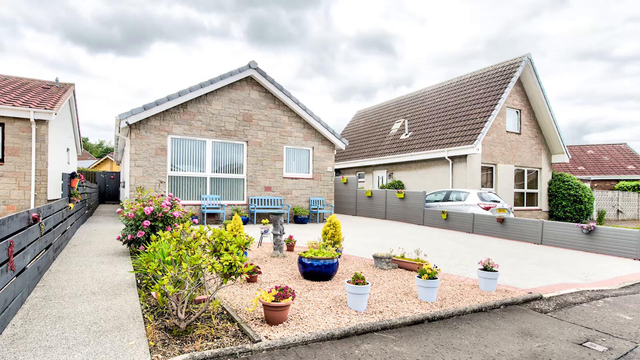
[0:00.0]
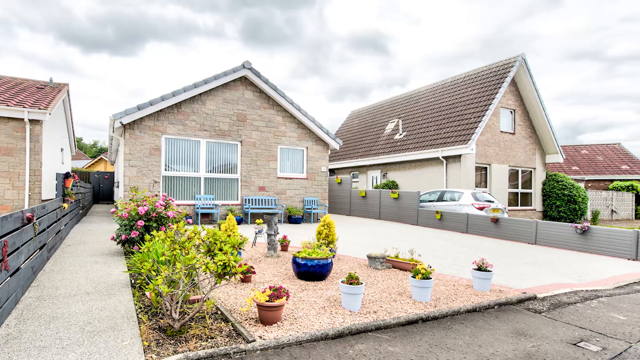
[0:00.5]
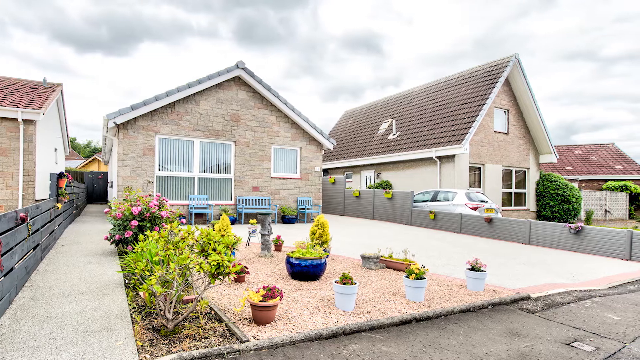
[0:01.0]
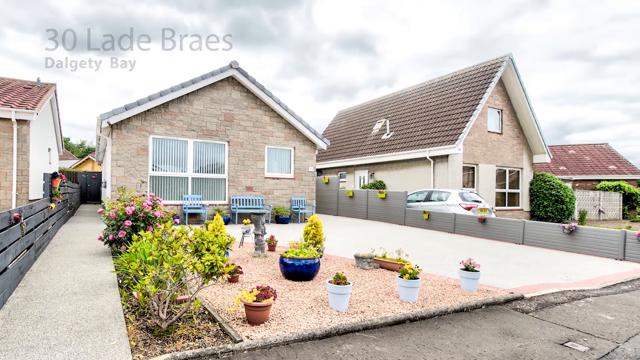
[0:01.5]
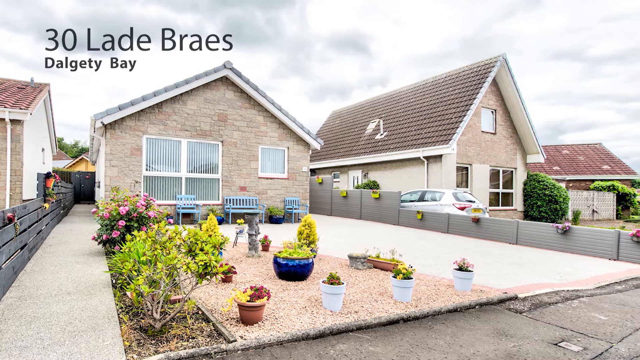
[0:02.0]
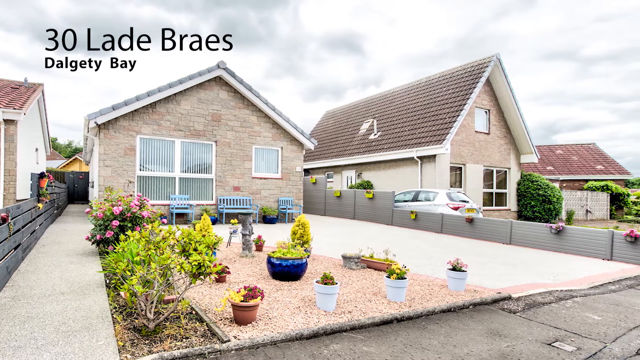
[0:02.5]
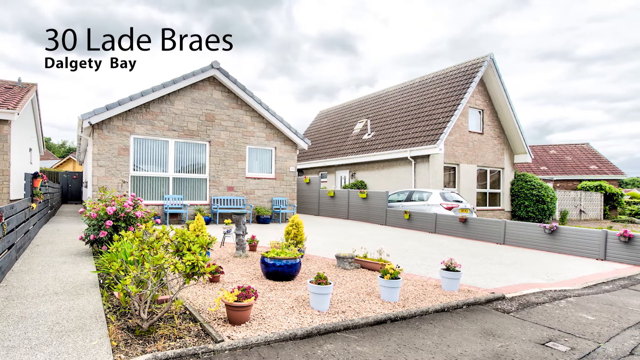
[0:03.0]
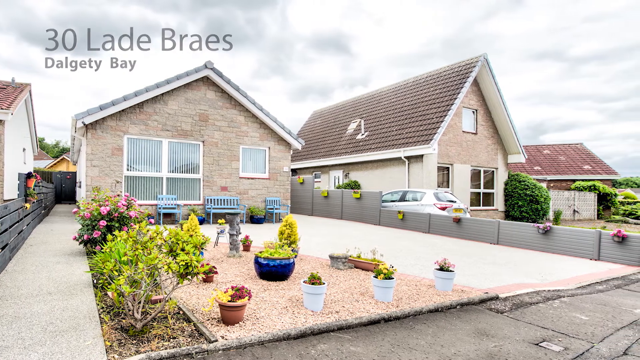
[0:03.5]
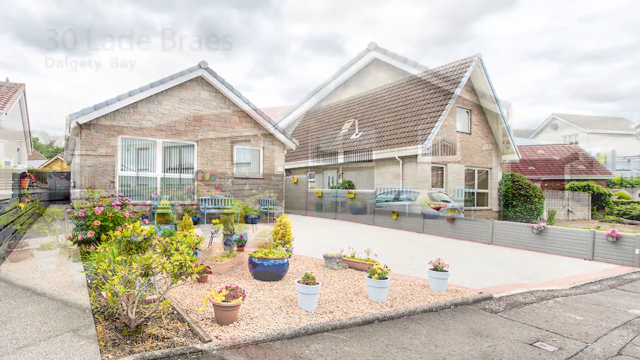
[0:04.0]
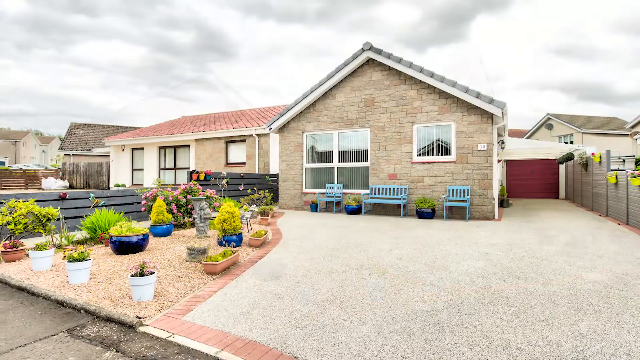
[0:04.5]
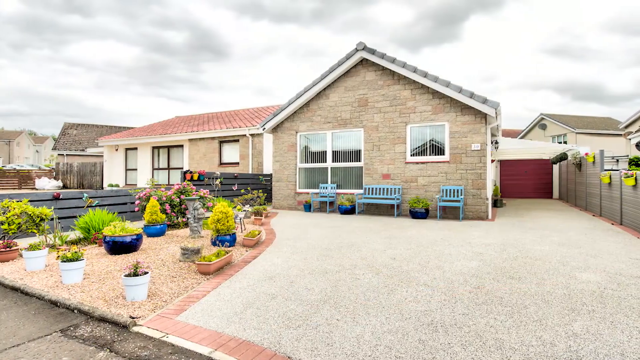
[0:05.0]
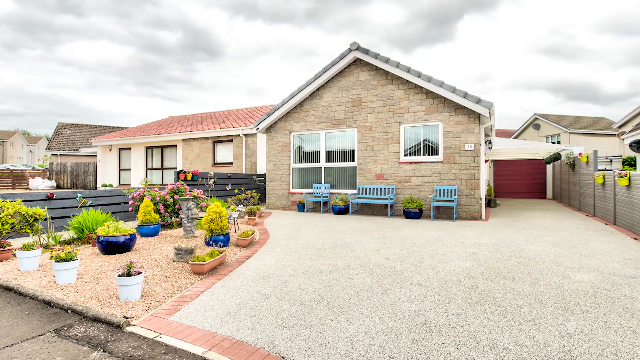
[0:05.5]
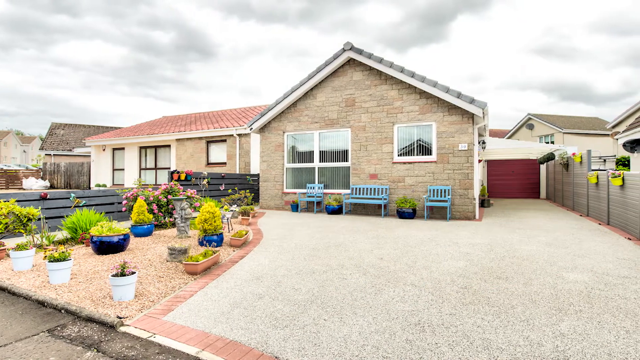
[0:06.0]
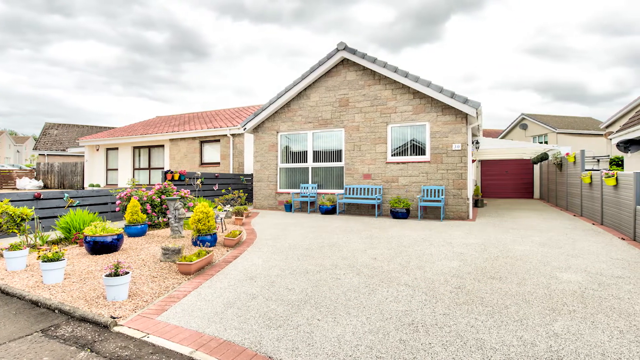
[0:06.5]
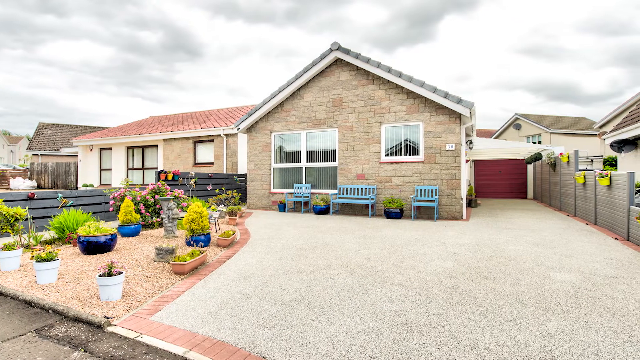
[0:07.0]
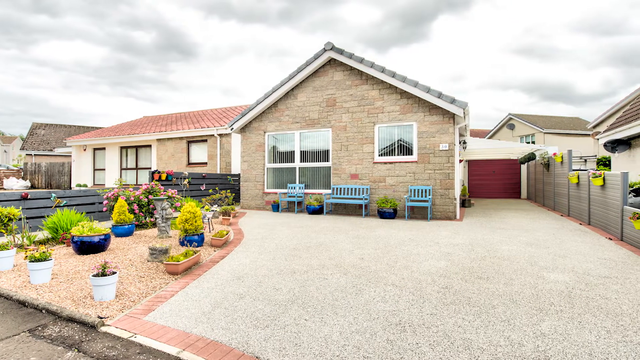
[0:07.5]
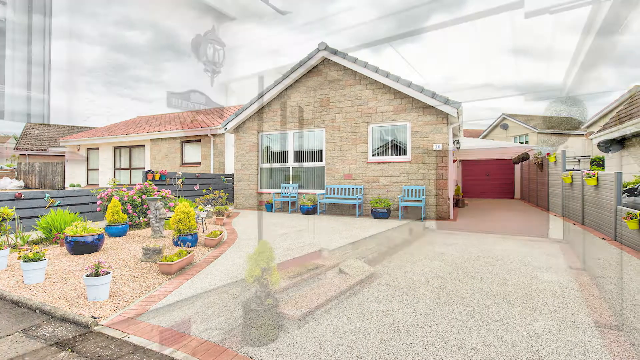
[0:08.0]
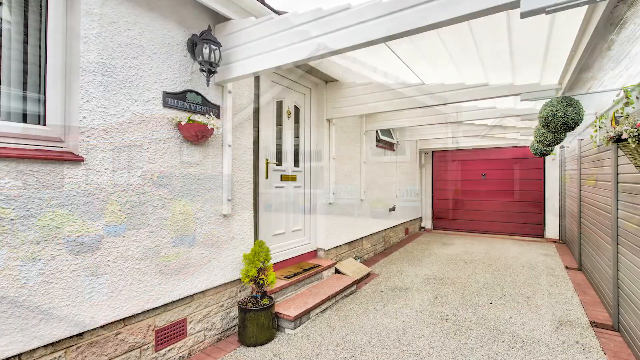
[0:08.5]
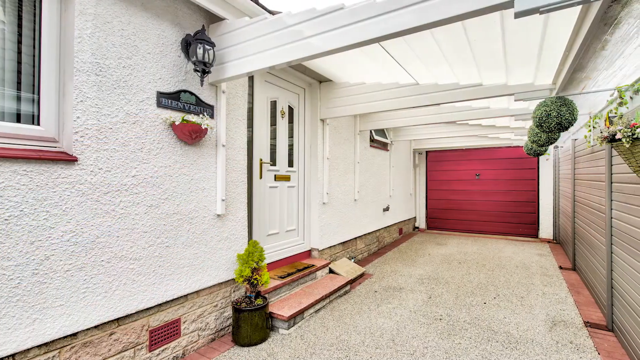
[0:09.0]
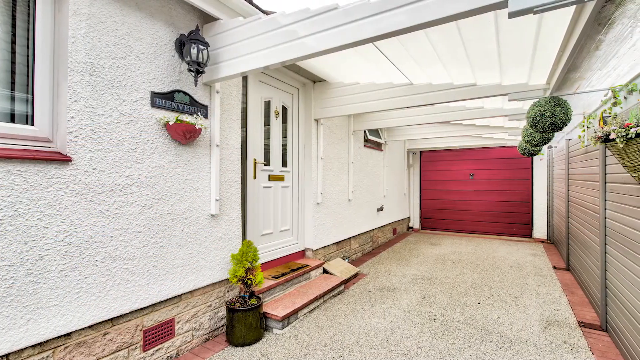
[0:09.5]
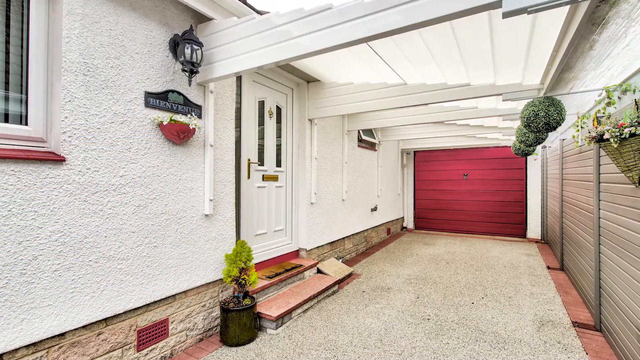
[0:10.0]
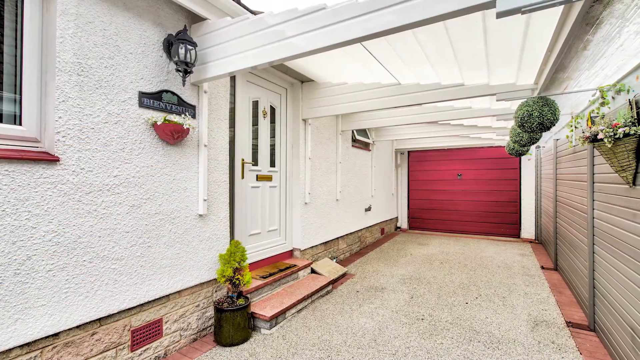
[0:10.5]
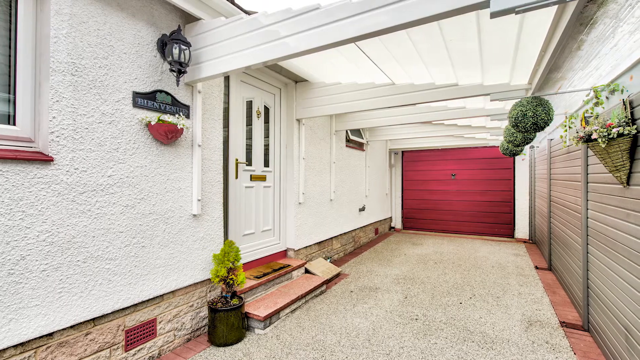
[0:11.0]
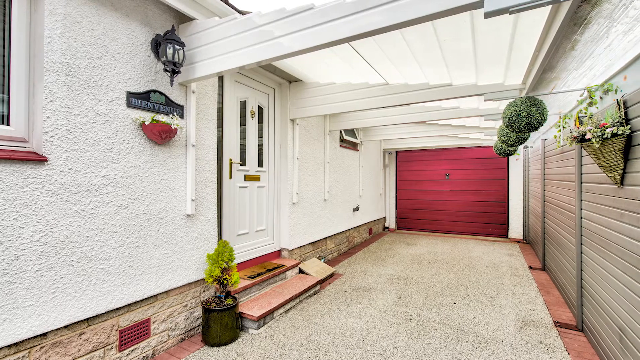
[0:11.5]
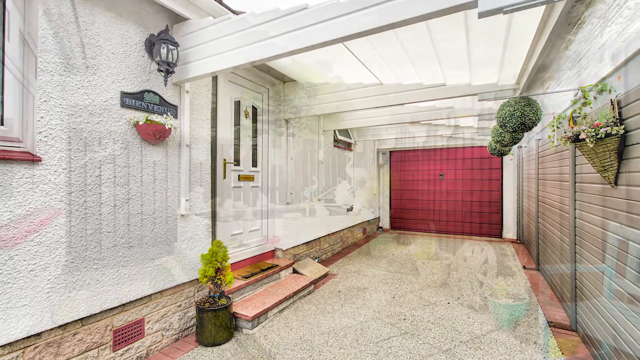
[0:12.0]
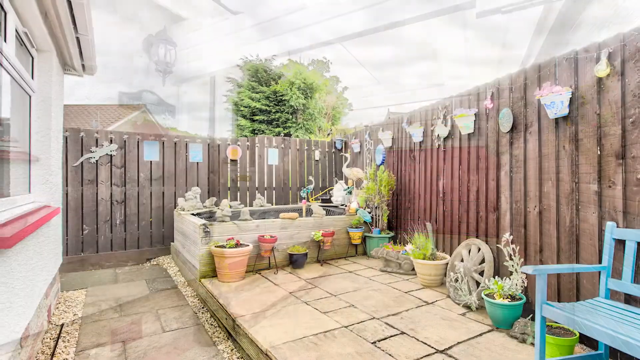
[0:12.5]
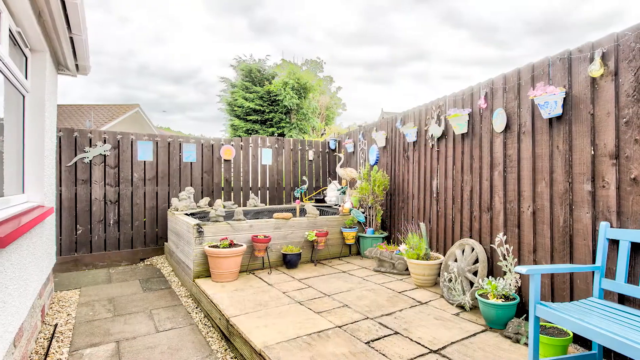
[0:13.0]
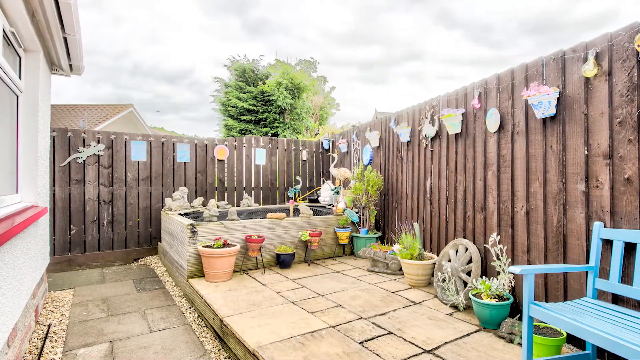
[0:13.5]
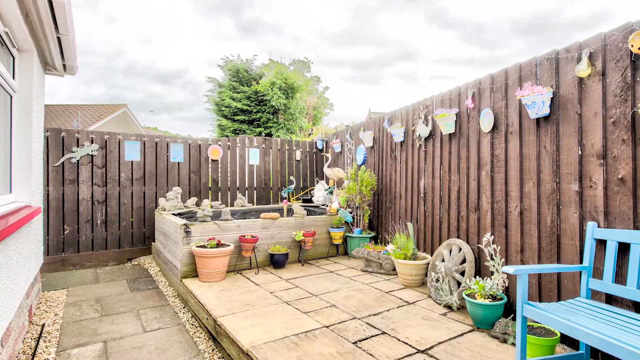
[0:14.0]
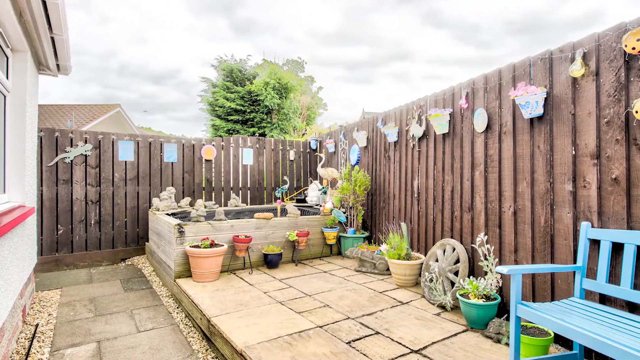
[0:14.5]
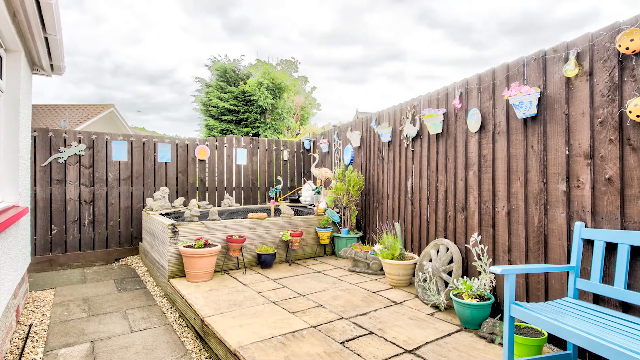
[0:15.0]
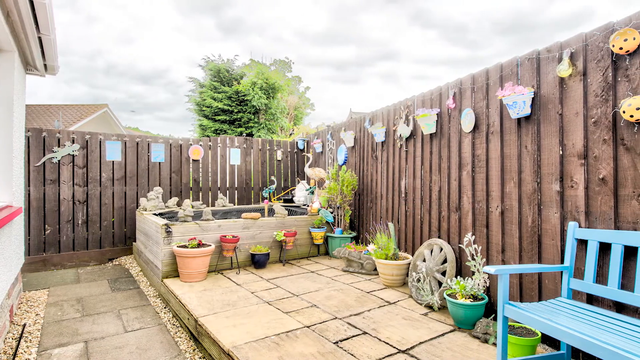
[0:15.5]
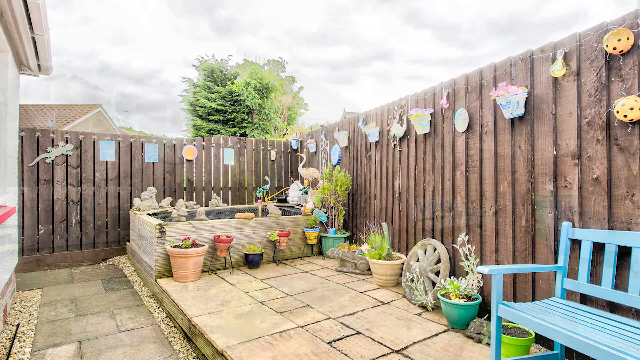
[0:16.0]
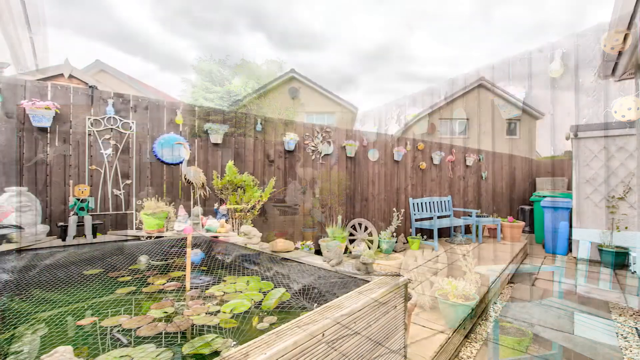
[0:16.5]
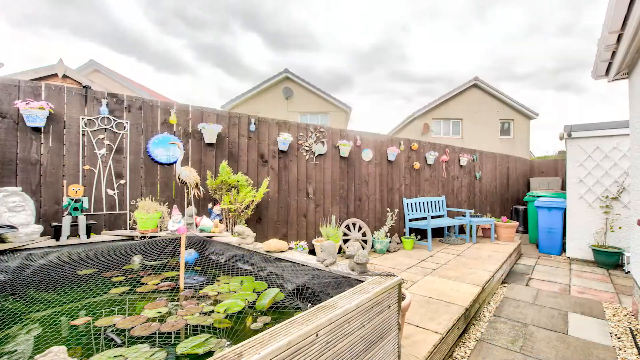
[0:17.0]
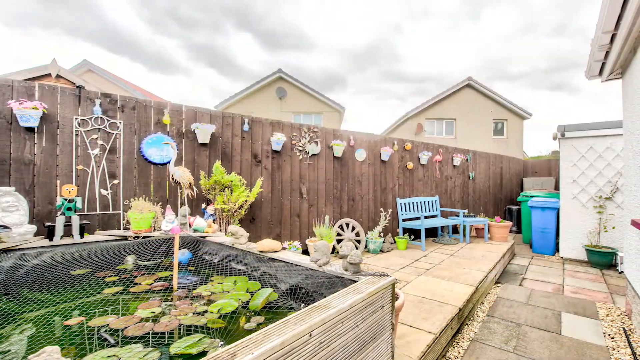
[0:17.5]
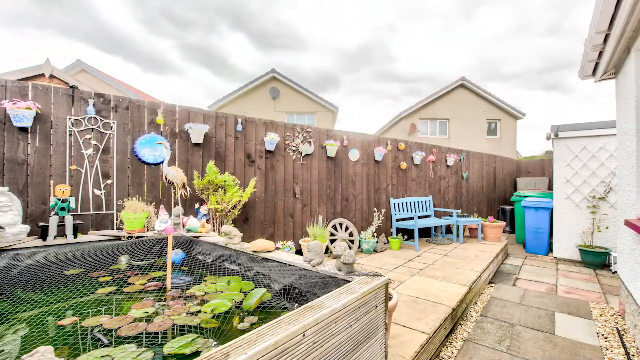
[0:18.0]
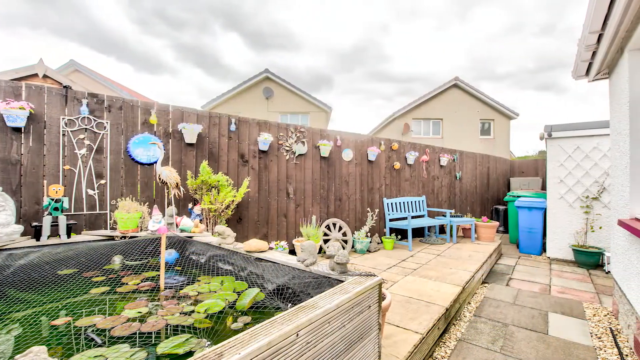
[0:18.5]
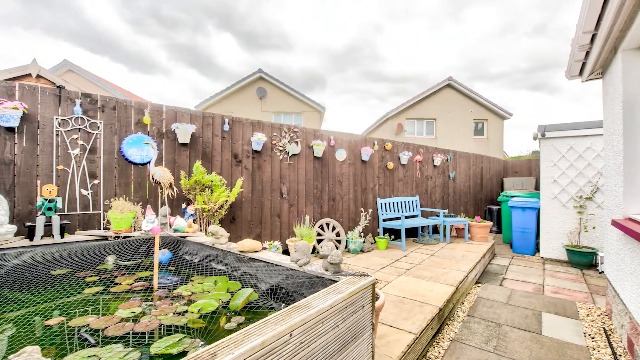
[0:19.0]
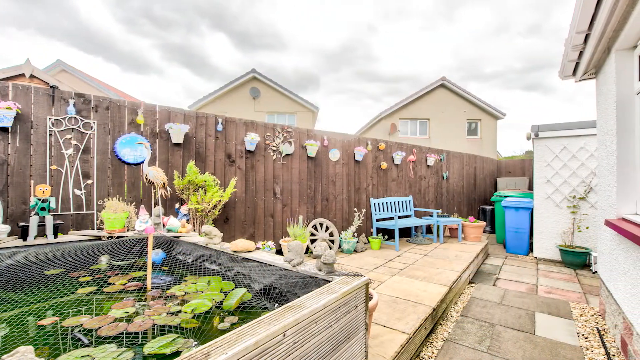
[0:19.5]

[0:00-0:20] A house from an estate agent's site is shown; it seems to be a bungalow, with a lot of hard standing out the front, three blue benches, various pot plants, a concrete driveway and a concrete path. The next house has a steeply pitched roof and a room upstairs. The video is a sequence of stills that are mildly animated in the edit. A few seconds in, a graphic appears that says "30 Lade Braes, Dalgety Bay". The video cuts to another view of the driveway, which looks very neat. There is a garage with a kind of purple door, which seems to be just a purple door, as an indoor shot of the carport that follows seems to be behind it. The next shot shows what is probably the side or the back of the house, with more hard standing, what appears to be a little raised fish tank, more blue benches, bins, a brown fence and pots hanging from the fence.